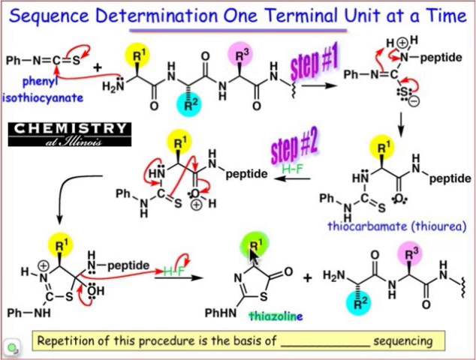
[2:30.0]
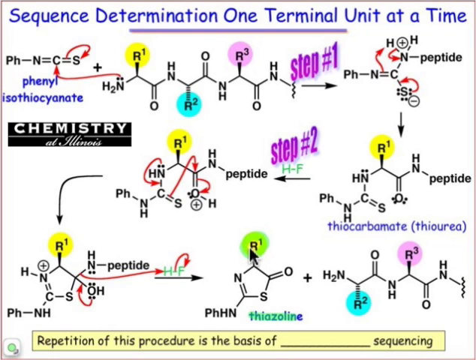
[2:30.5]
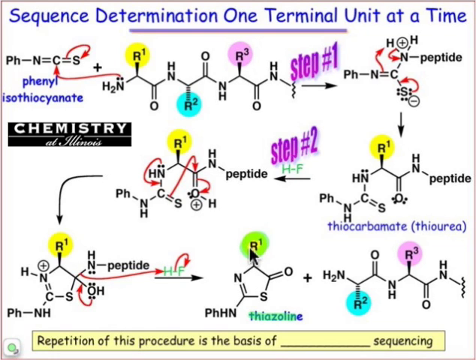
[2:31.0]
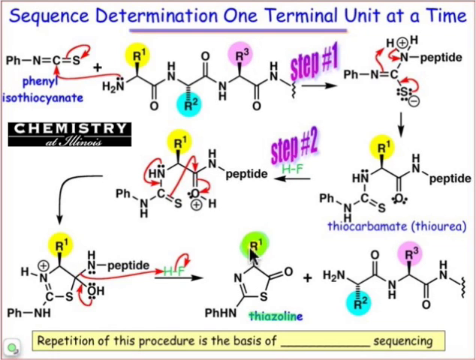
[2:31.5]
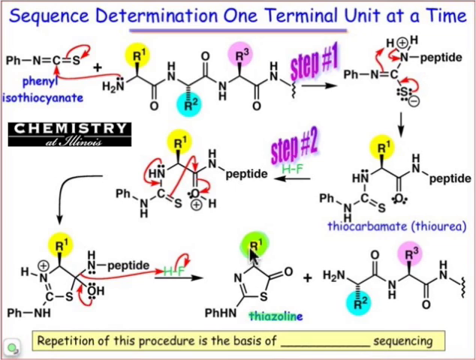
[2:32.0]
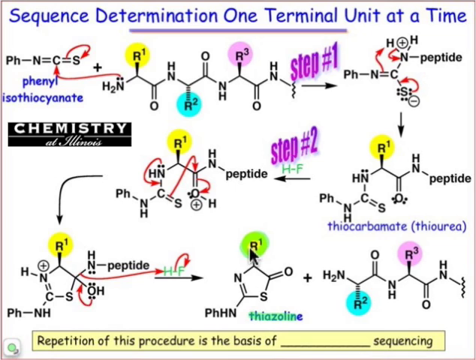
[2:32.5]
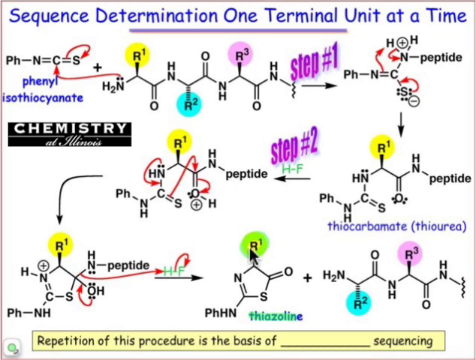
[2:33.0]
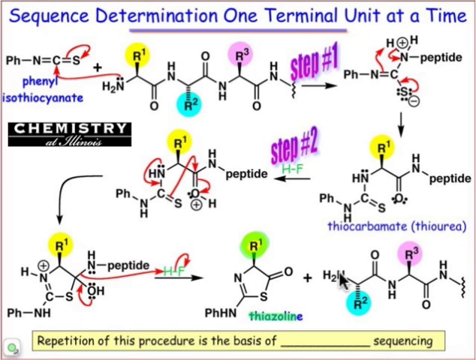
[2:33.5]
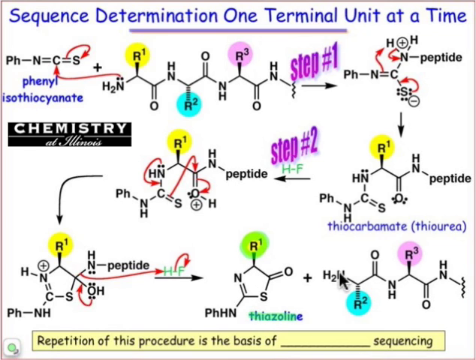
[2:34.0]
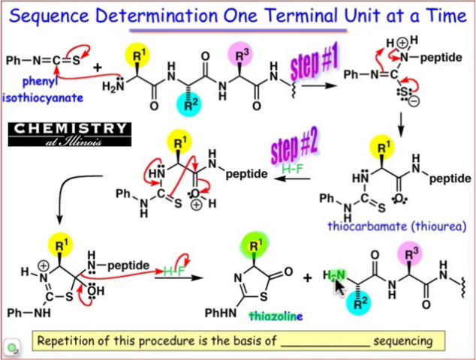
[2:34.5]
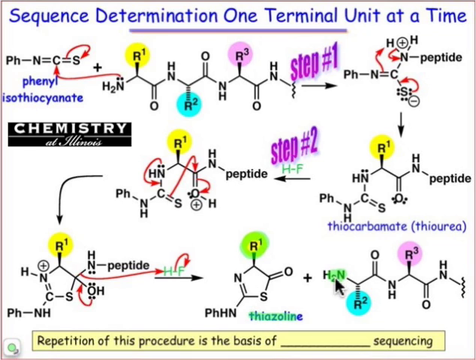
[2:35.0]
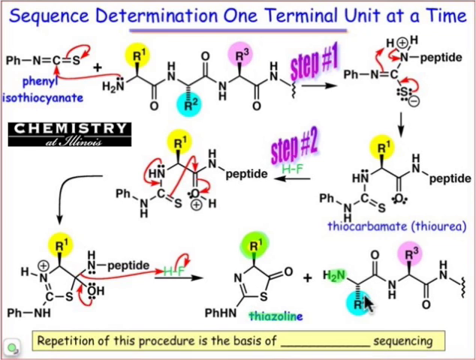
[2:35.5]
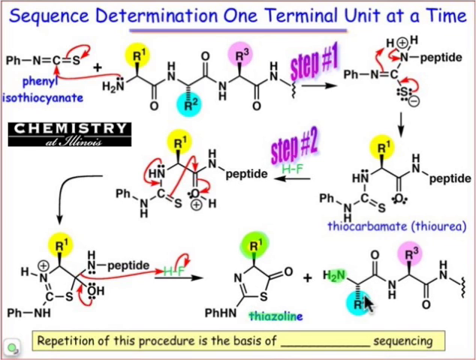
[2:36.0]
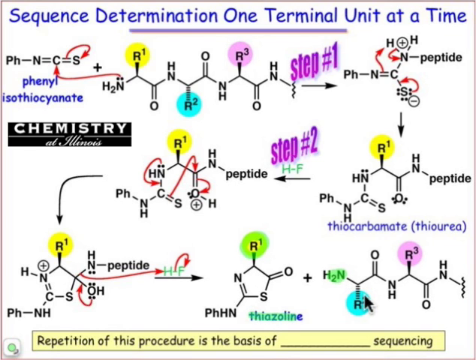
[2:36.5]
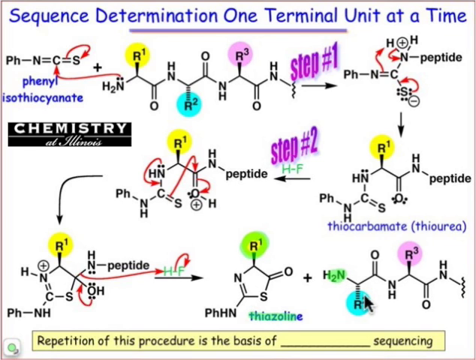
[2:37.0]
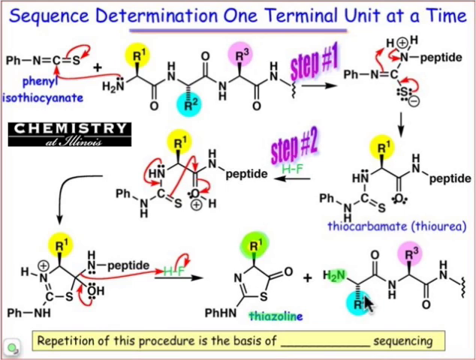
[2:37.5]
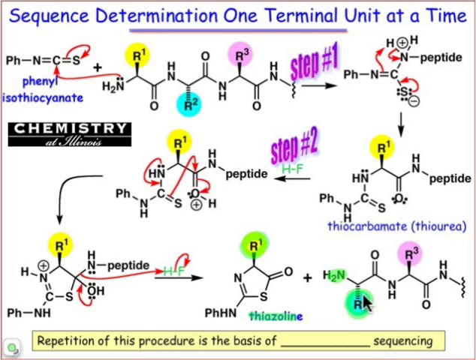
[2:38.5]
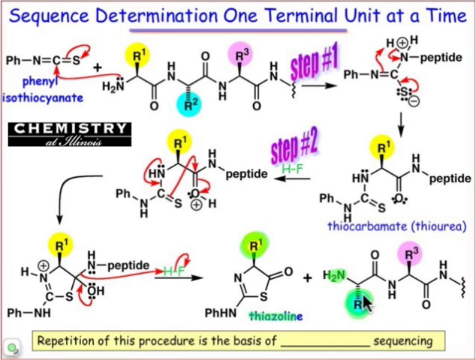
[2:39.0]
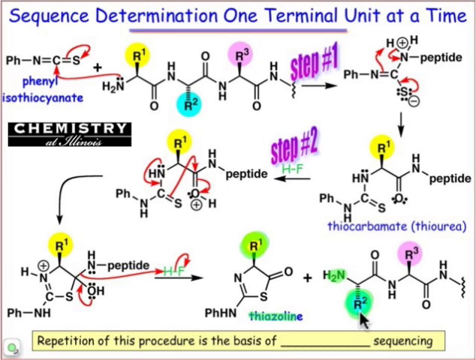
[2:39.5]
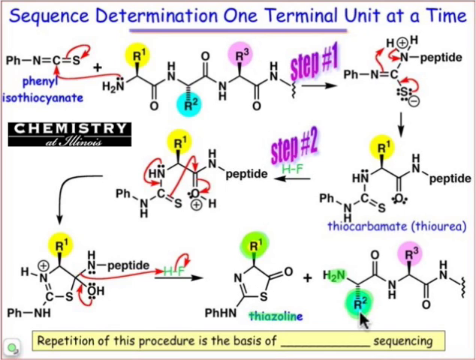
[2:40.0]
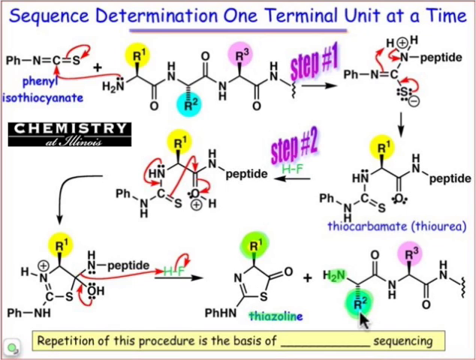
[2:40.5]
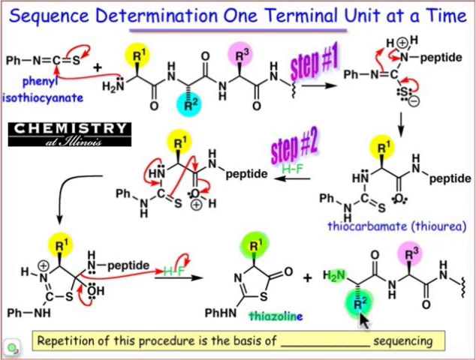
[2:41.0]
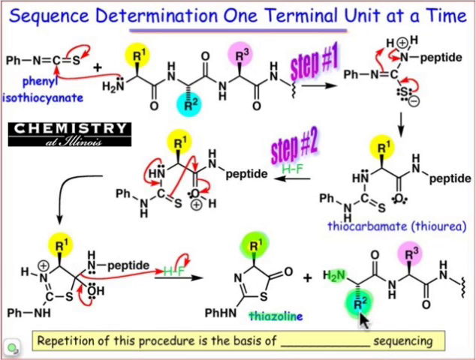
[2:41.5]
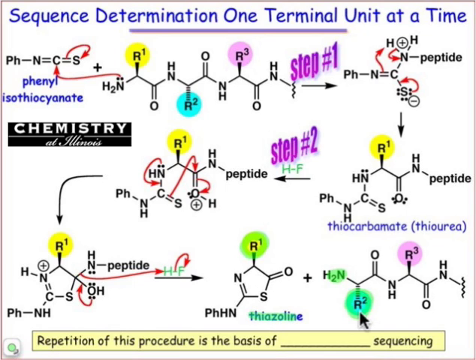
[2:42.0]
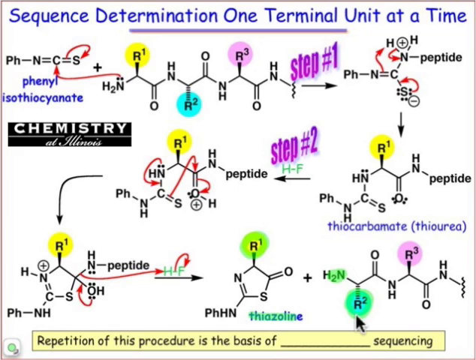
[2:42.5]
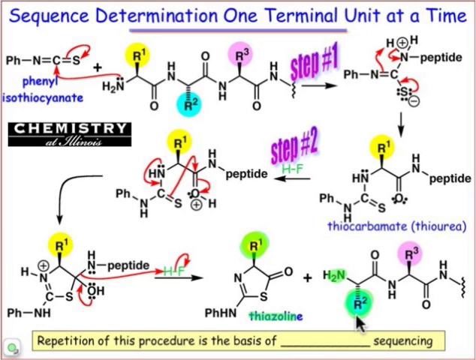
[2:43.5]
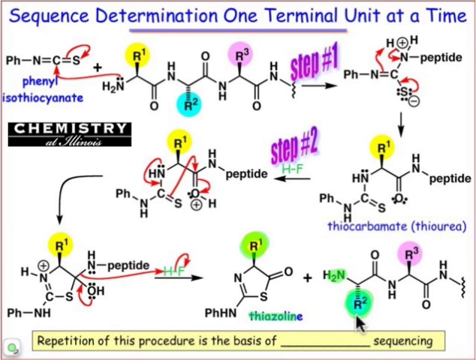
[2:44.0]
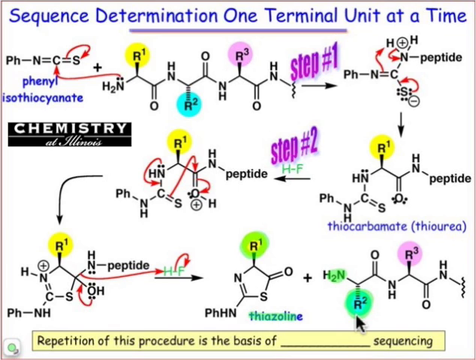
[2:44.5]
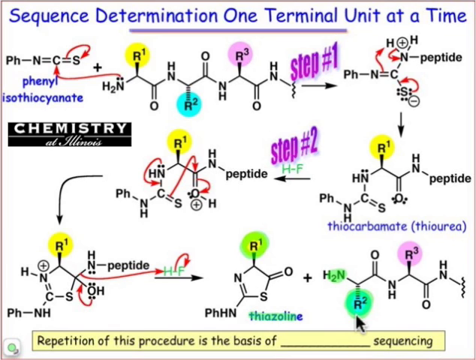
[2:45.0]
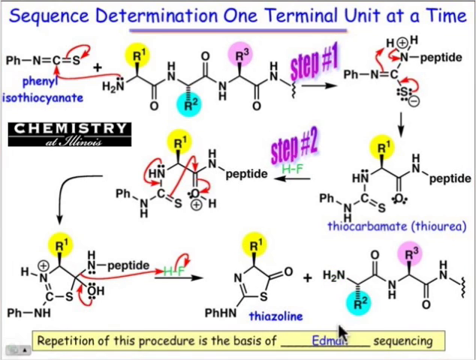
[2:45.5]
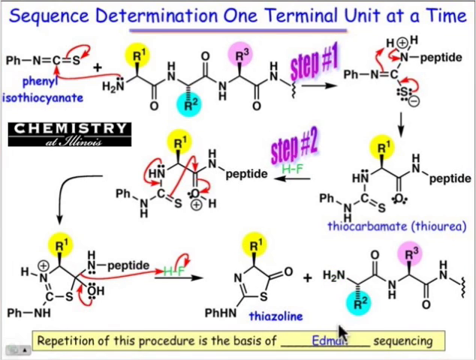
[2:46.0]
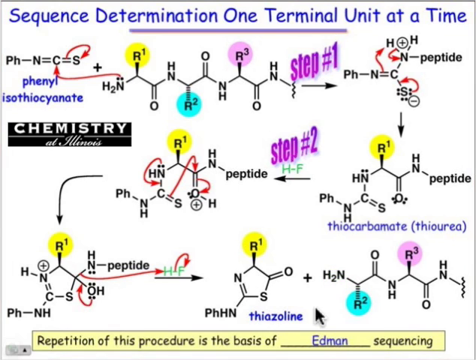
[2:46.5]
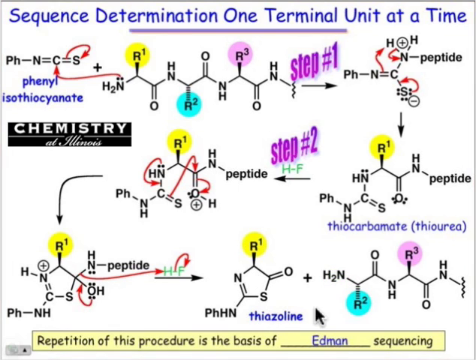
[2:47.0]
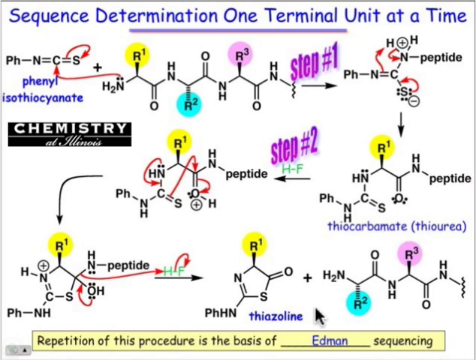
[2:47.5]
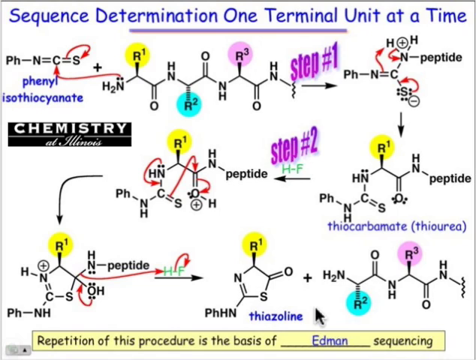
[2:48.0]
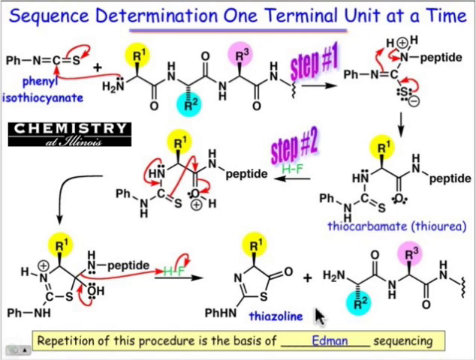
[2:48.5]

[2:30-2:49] The screen has a white background with cobalt blue text across the top that says "a sequence determination one terminal unit at a time." Directly beneath that, at the center top, a purple line runs left to right. Beneath that on the left, black text shows "pH-n=c=s" plus h2n, which goes up to r1 inside a yellow circle, down to an o, up to an hn, down to r2 inside a blue circle, up to o, down to nh, up to r3 inside a pink circle, down to o, up to hn, and down to a squiggle. Directly above the squiggle is purple text that says "step number one," with a directional arrow pointing to the right. Beneath that on the left side is a black rectangle with white text that says "chemistry at Illinois." Beneath that is a sequence determination for thiocarbonate, beginning with pH, down to nh, up to c, up to hn, up to r1 inside a yellow circle, down to o, up to hn-peptide. It is followed by a directional arrow pointing to the left. Directly above that is green text that says "h-f," and directly above that is purple text that says "step number two." Beneath that are thiocarbonate and thiourea, and further down is thiazoline.